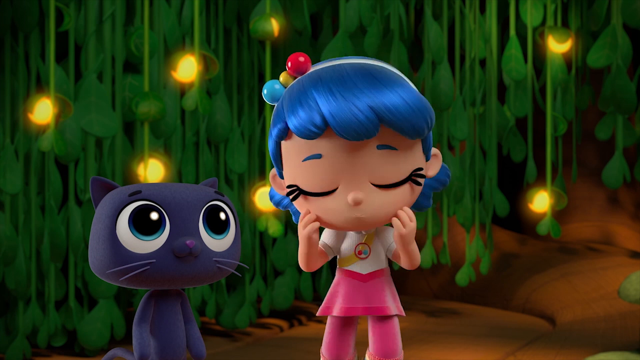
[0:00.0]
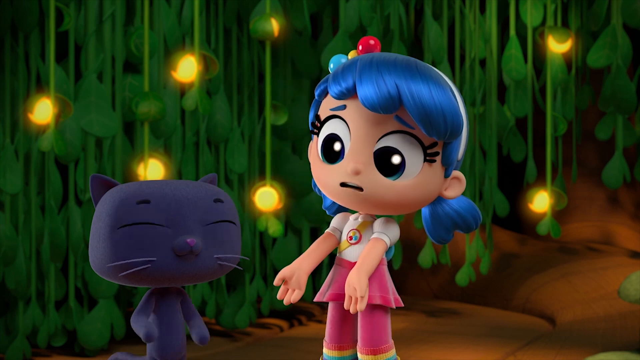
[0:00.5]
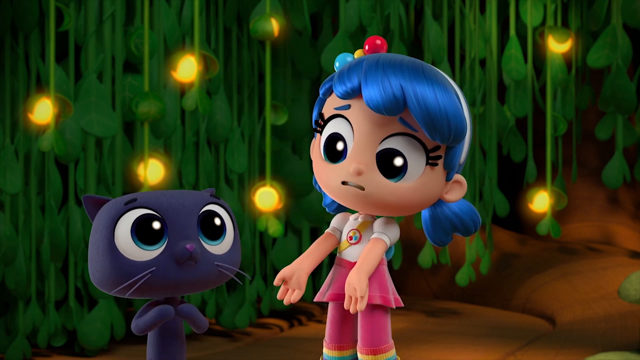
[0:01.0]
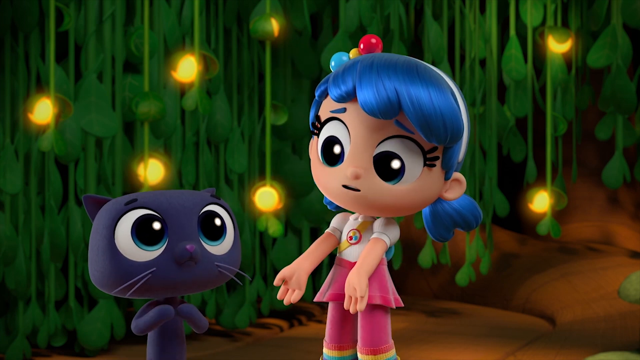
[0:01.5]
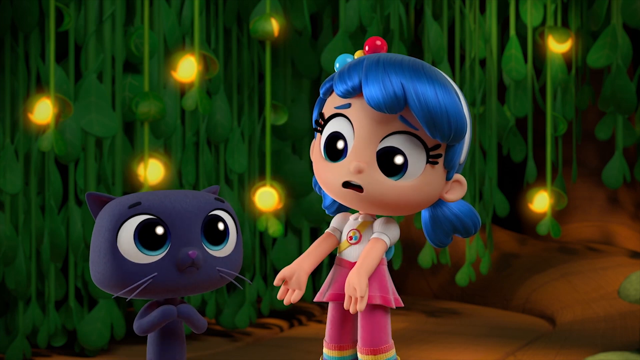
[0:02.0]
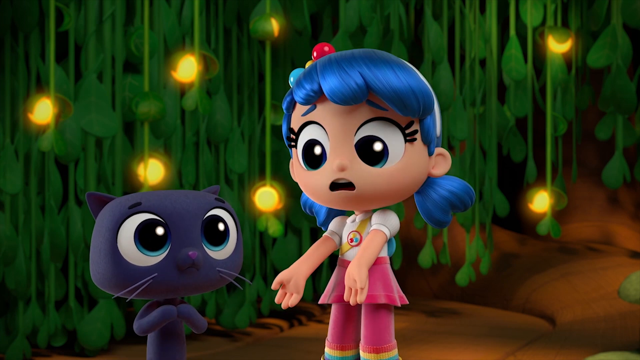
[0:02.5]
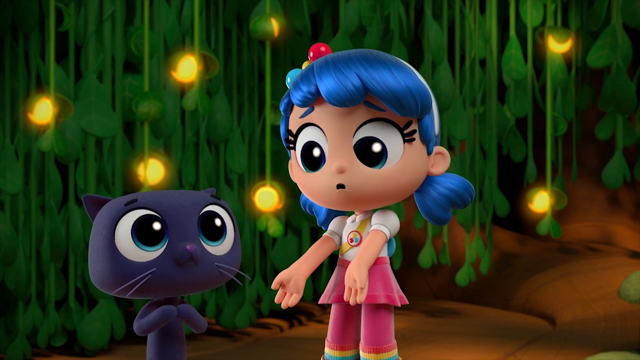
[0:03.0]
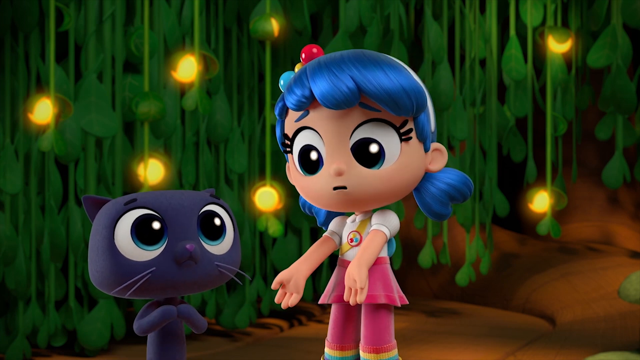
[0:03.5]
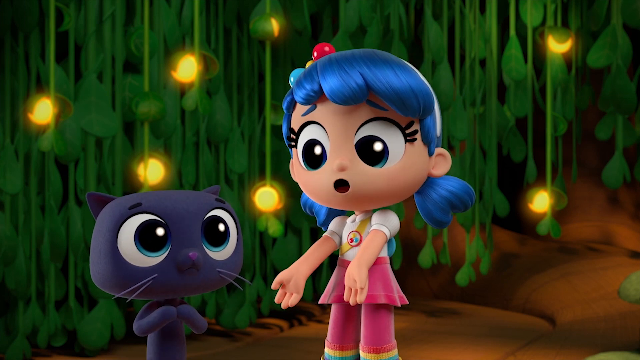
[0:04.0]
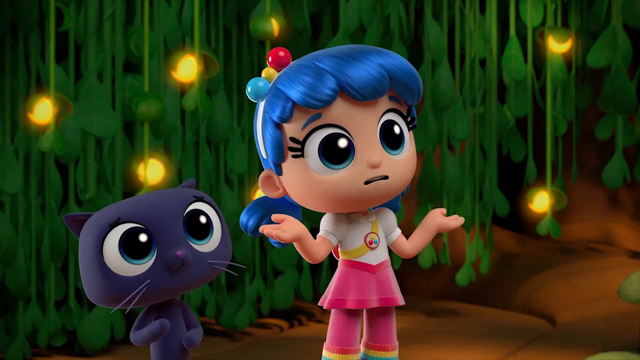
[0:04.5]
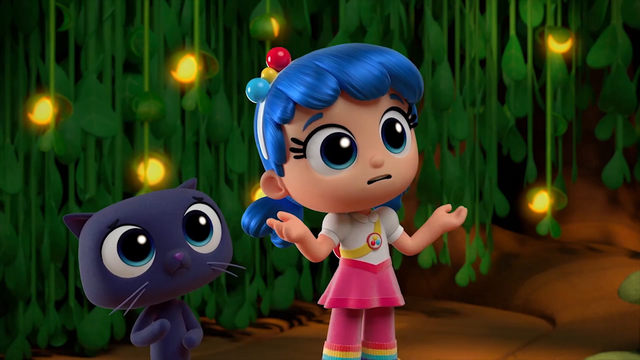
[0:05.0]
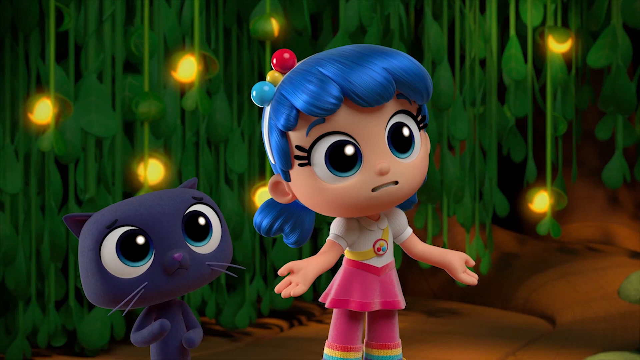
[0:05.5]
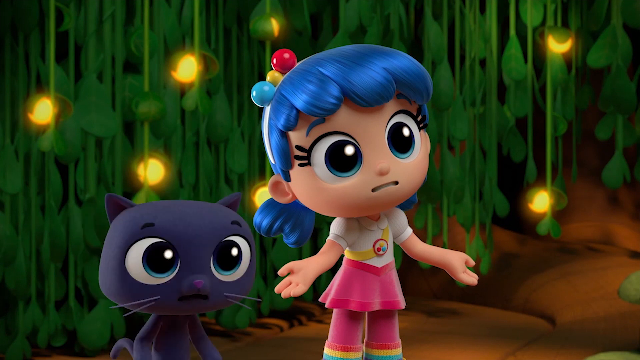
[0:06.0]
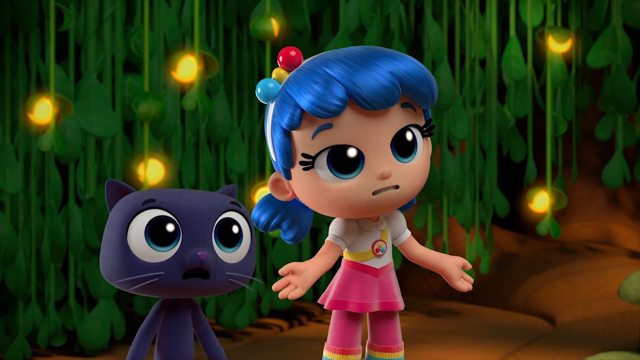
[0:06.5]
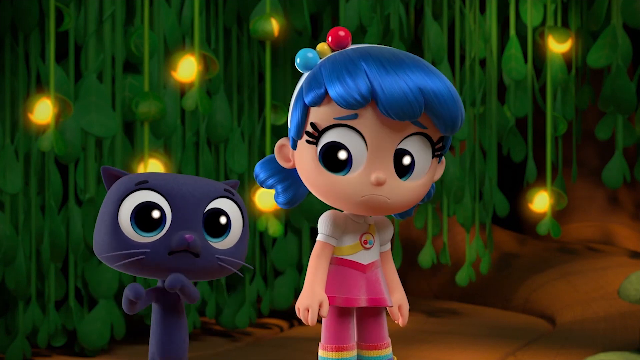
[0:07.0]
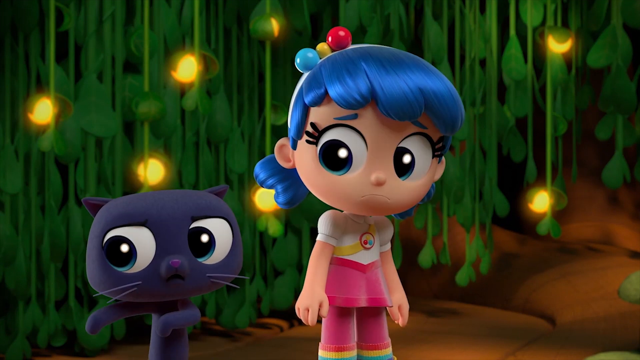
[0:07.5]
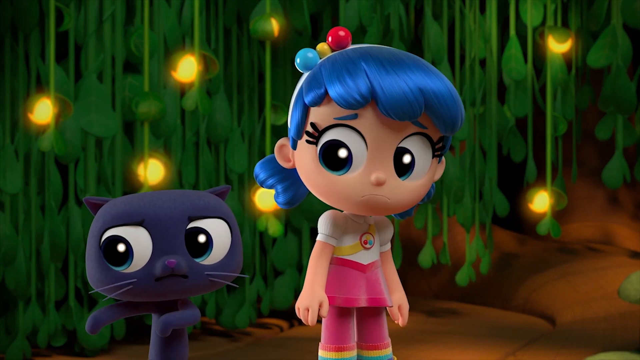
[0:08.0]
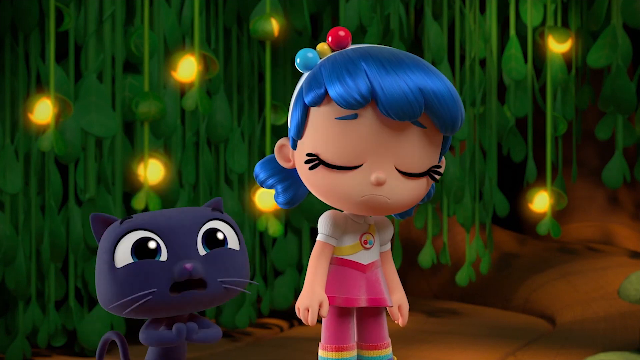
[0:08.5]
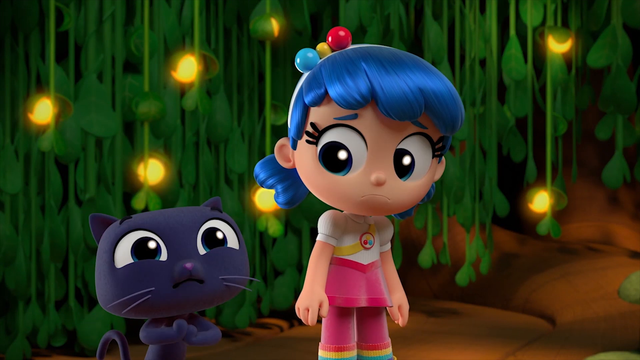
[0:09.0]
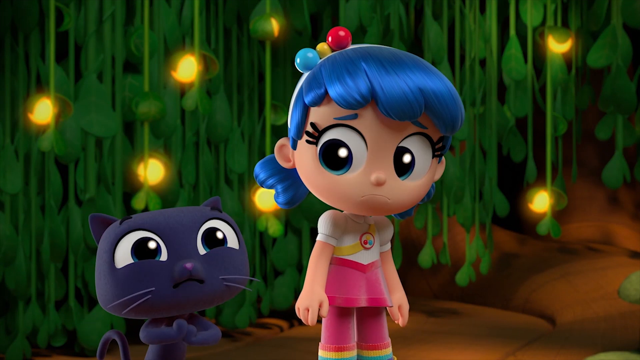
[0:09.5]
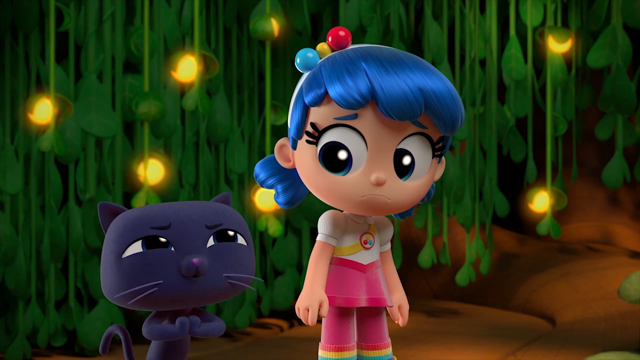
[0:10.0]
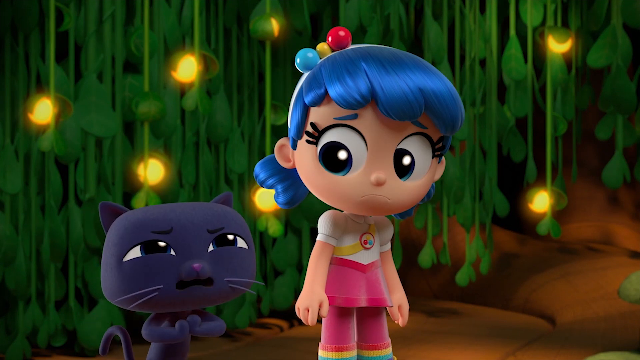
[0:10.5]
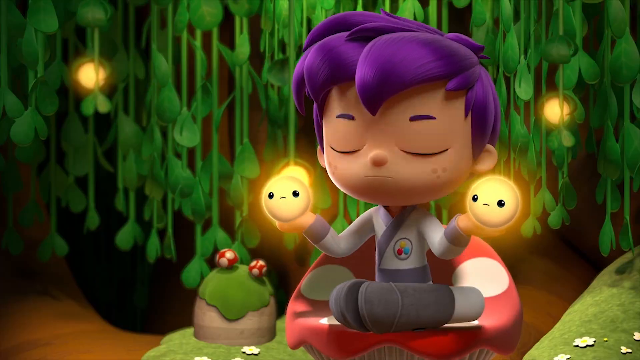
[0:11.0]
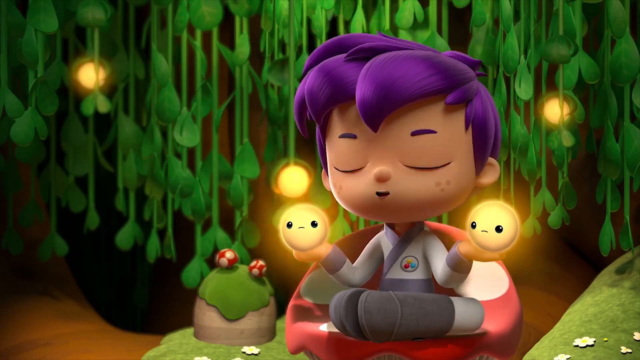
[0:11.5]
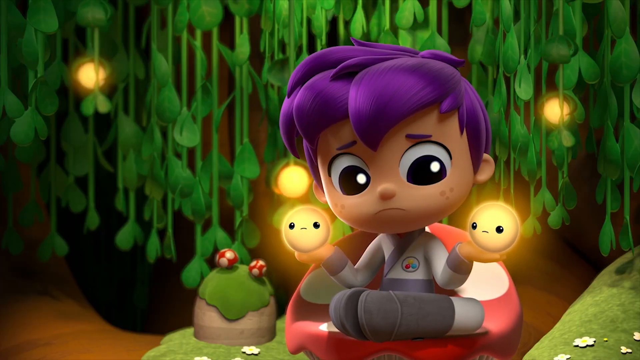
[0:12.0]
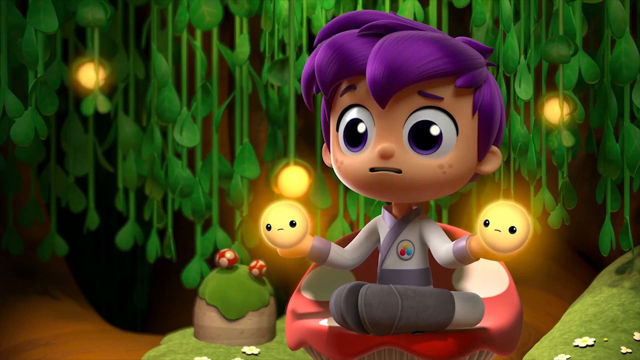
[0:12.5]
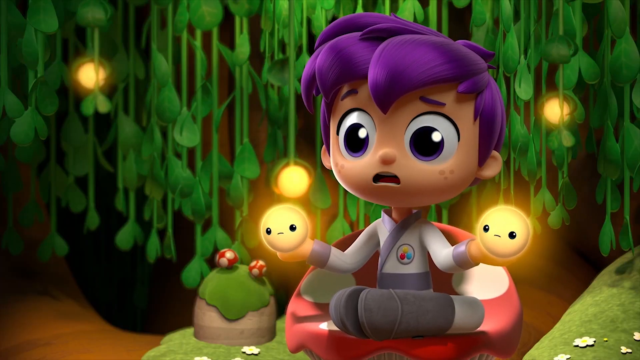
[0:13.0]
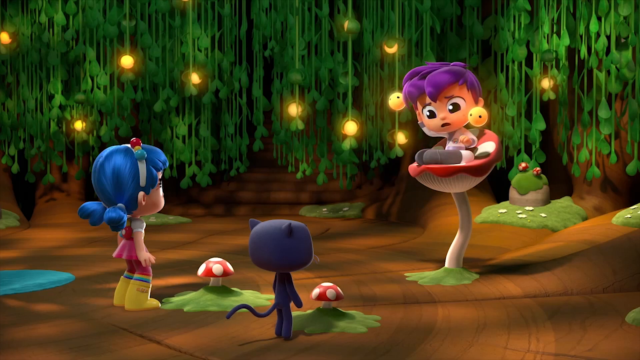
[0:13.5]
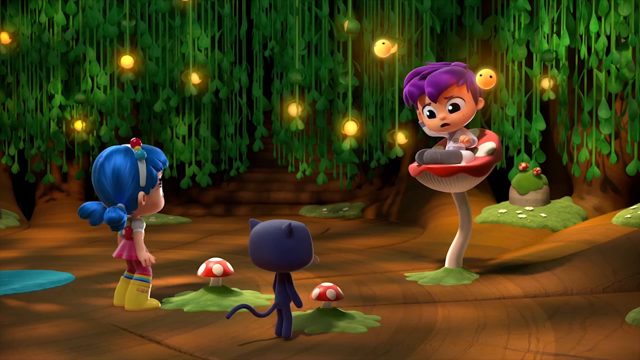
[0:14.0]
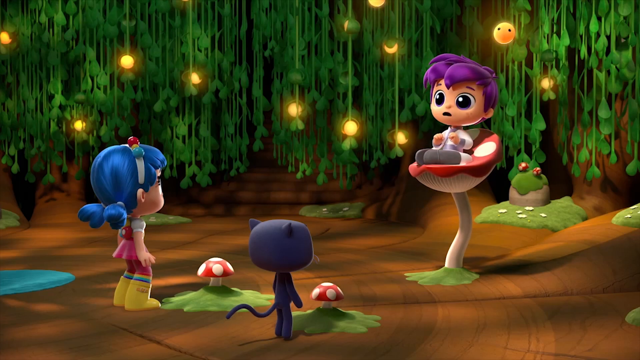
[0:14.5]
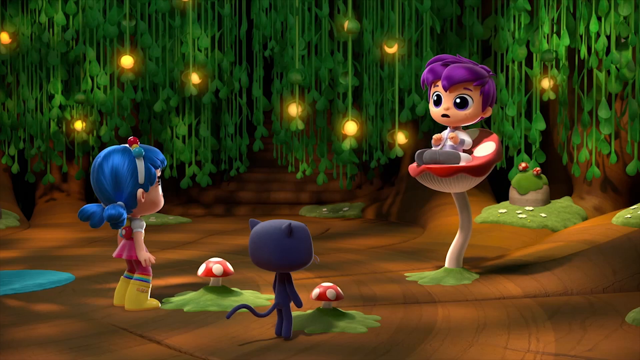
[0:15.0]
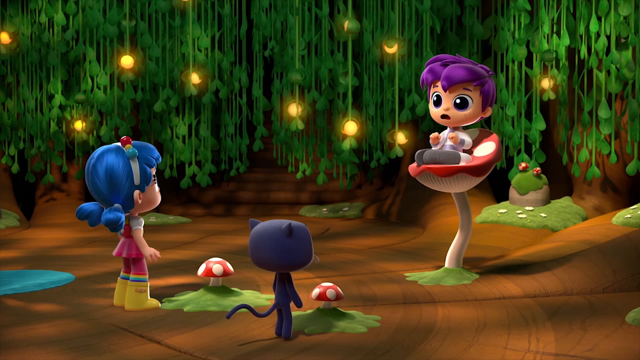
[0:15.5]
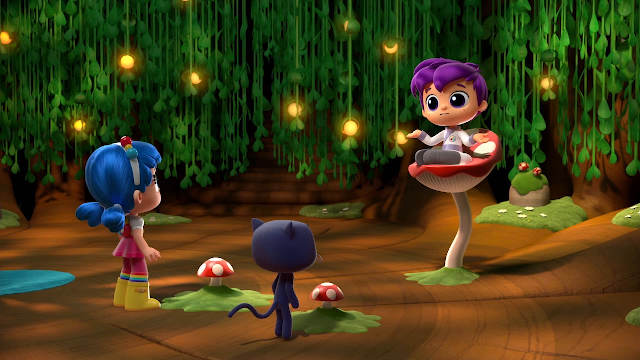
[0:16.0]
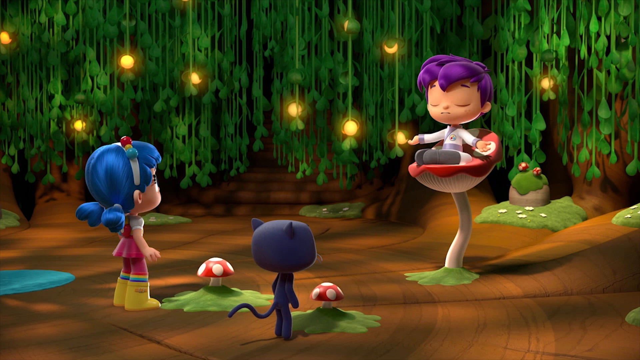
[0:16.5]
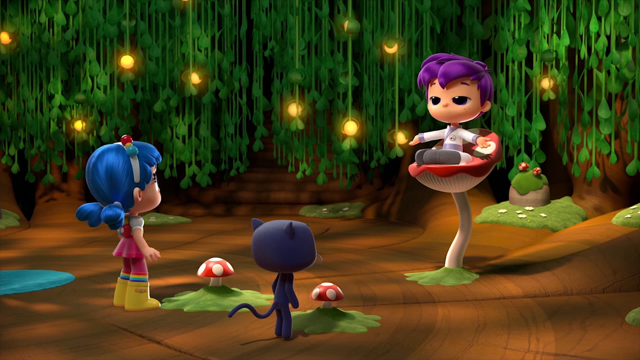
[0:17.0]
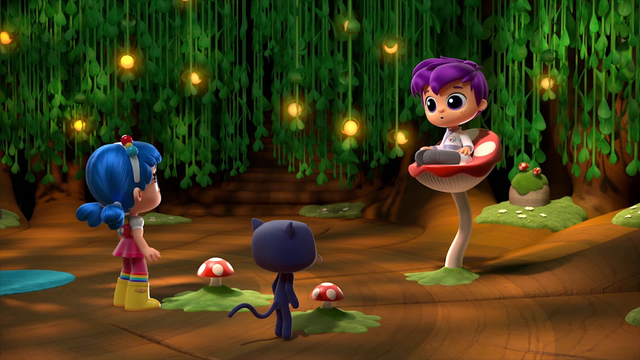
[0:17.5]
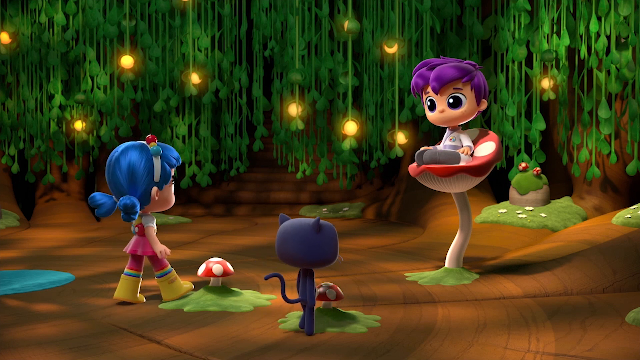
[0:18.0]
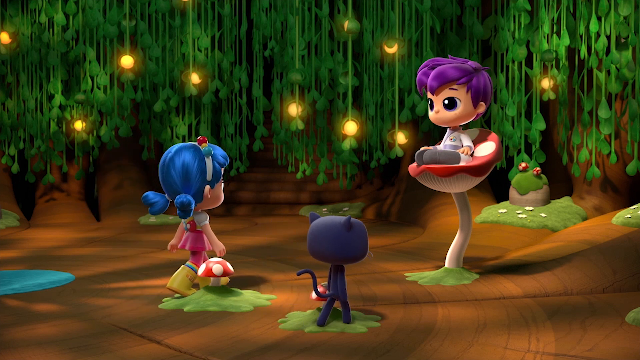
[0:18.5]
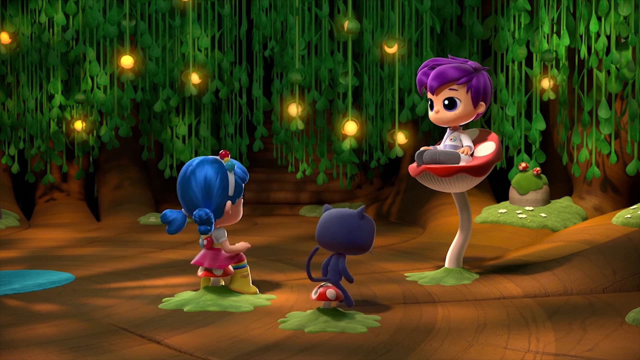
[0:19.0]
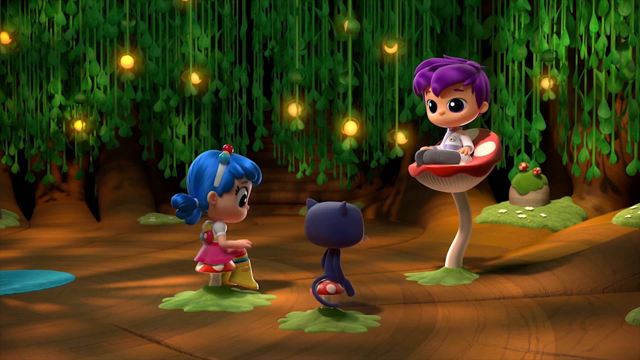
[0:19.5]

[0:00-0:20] A girl holds her face a little. The background at first looks like Christmas, but it has vines, and on some of the vines there are yellow glowing balls, kind of behind her. She has cute eyelashes and wears a pink dress with a white shirt. To the left is a cute little purple cat with big blue eyes. She kind of looks at the cat with her arms out in front of her while the cat kind of nods as she speaks. With her hands up, she seems to say "what are we gonna do?" Then the cat starts speaking, almost gesturing "over here" and kind of pointing to his right, nodding, and then kind of on his knees as if almost pleading. Another kid holds little yellow balls that apparently are little people, with eyes and a mouth, and they blink. The kid, who has purple hair, sits up on some kind of red stem flower or something, which looks almost like Mario, with red and white toned mushrooms kind of in between the girl and the cat. The little balls apparently float away. The girl and the cat kind of approach him, and now they are sitting on the toadstool; as they sit on it, it goes up in the air like a lift.